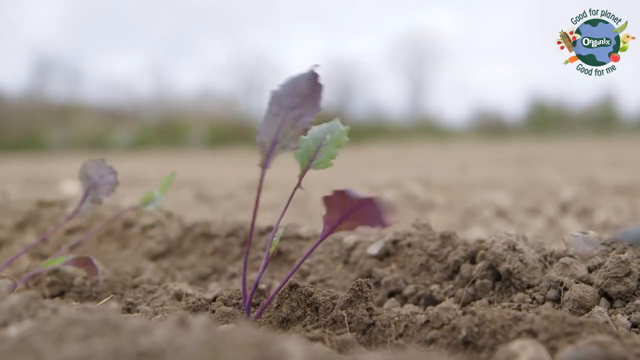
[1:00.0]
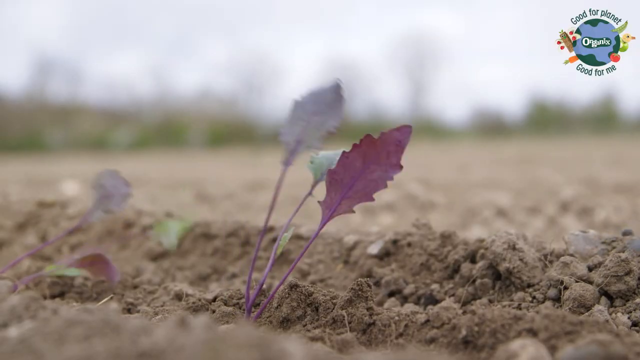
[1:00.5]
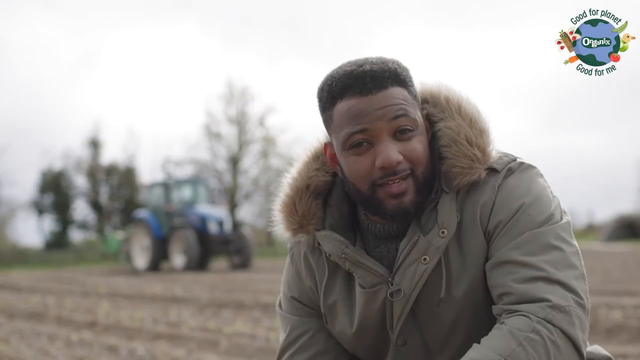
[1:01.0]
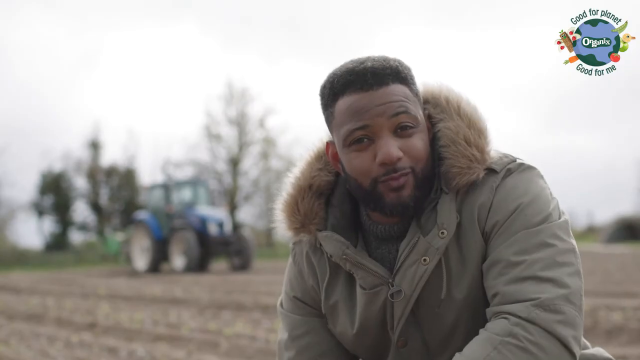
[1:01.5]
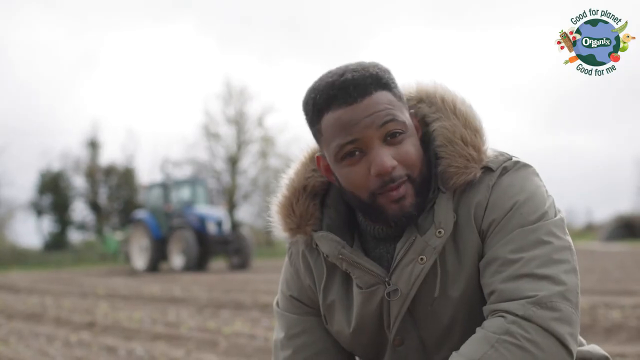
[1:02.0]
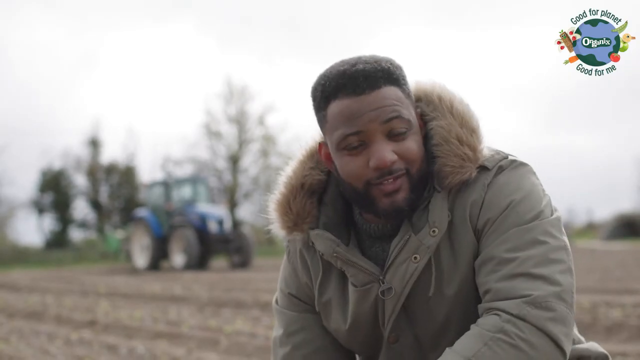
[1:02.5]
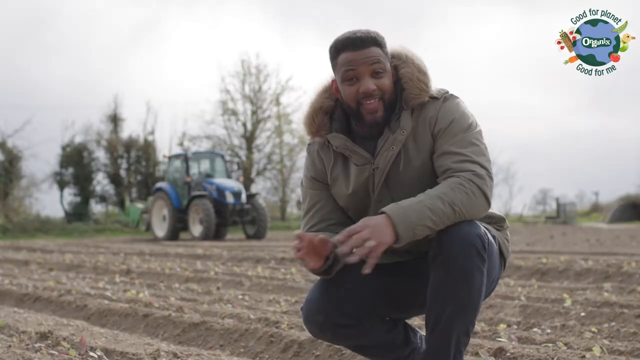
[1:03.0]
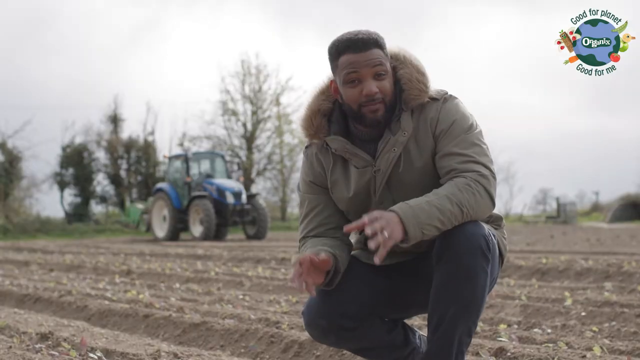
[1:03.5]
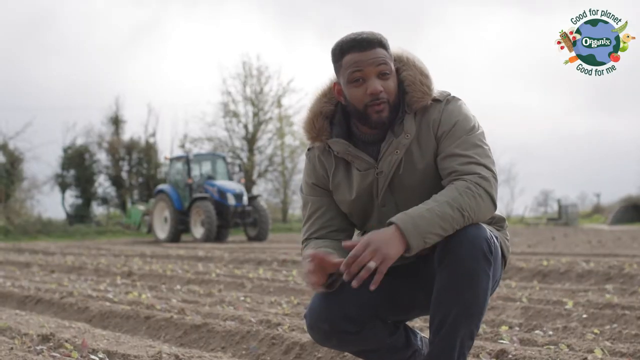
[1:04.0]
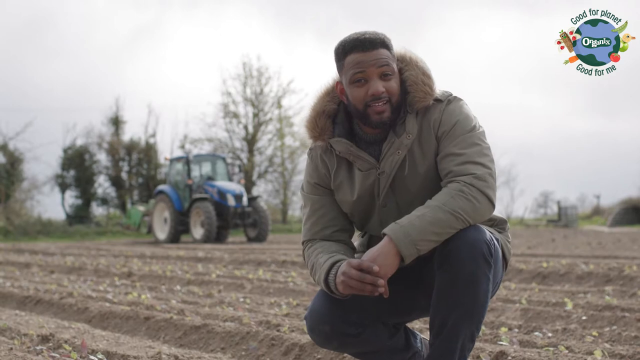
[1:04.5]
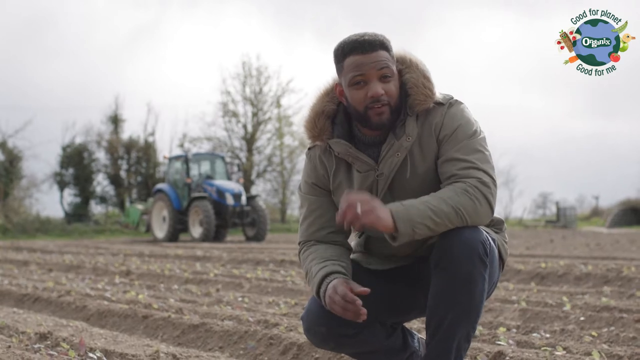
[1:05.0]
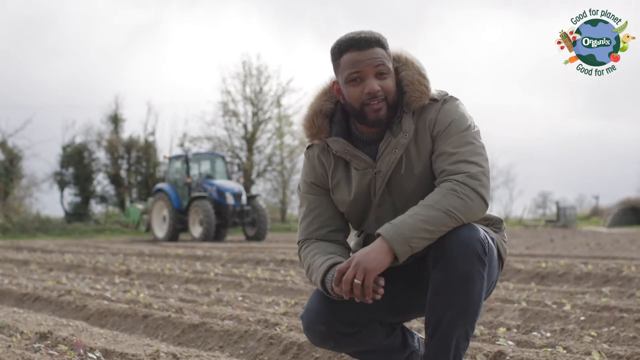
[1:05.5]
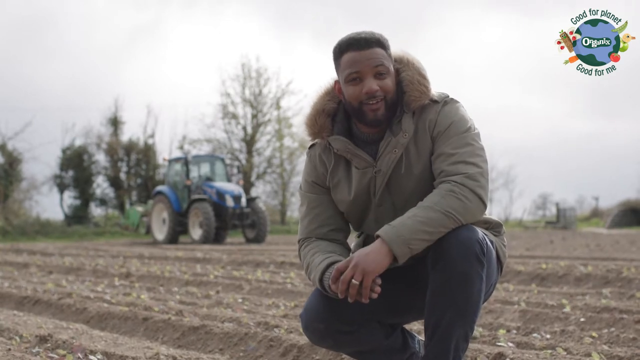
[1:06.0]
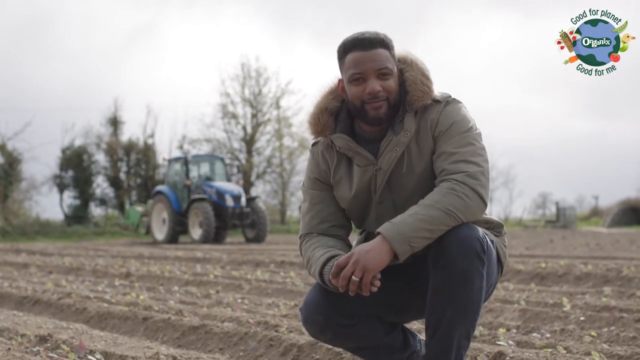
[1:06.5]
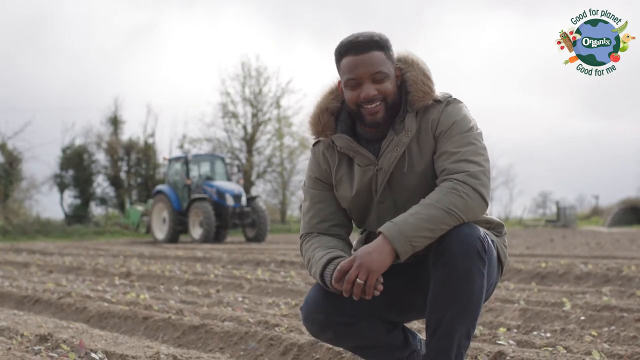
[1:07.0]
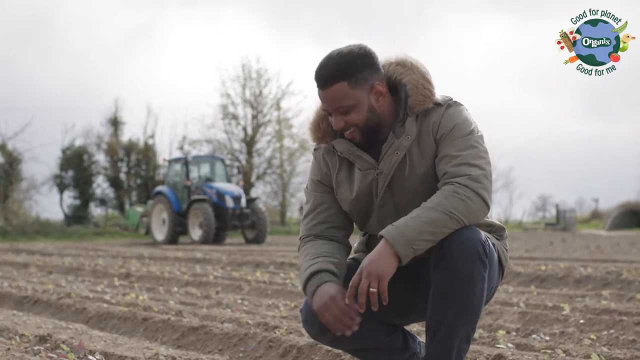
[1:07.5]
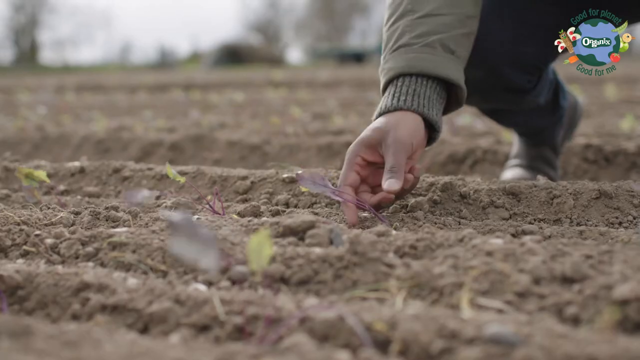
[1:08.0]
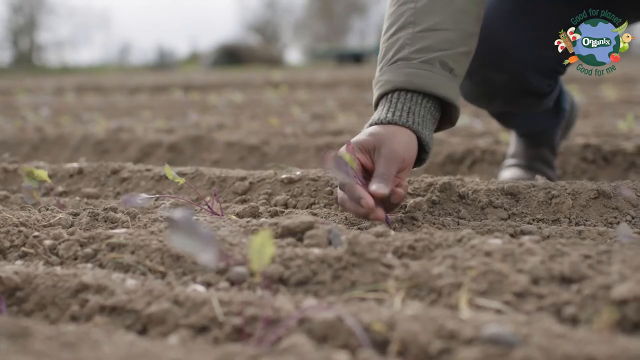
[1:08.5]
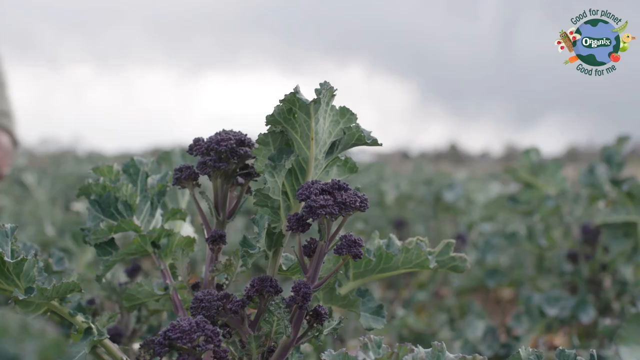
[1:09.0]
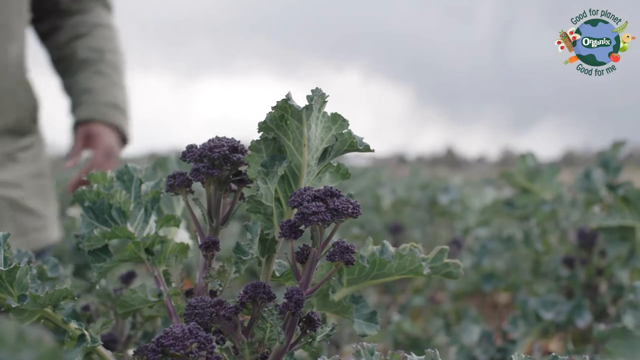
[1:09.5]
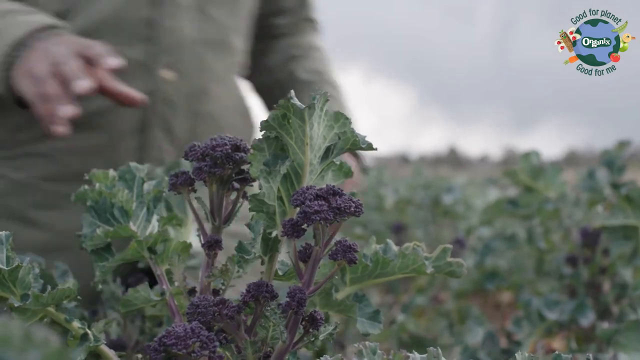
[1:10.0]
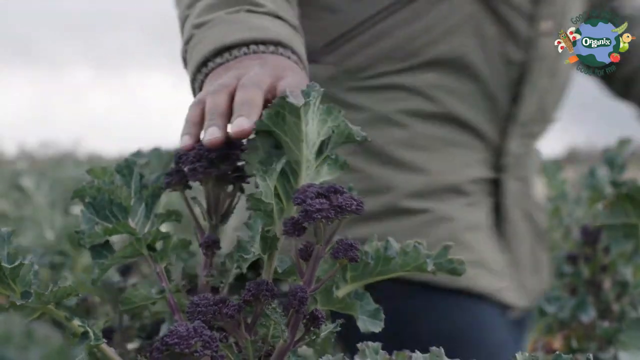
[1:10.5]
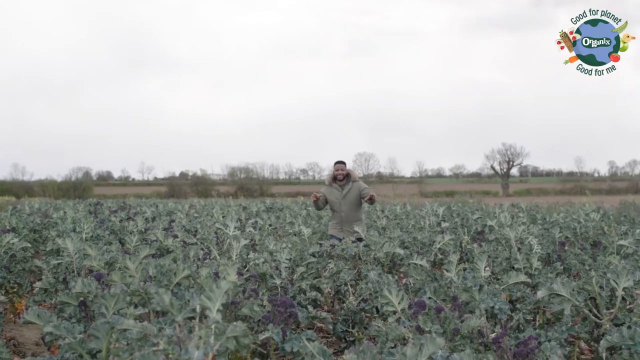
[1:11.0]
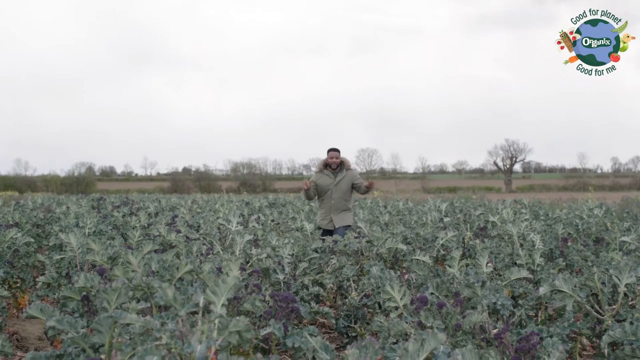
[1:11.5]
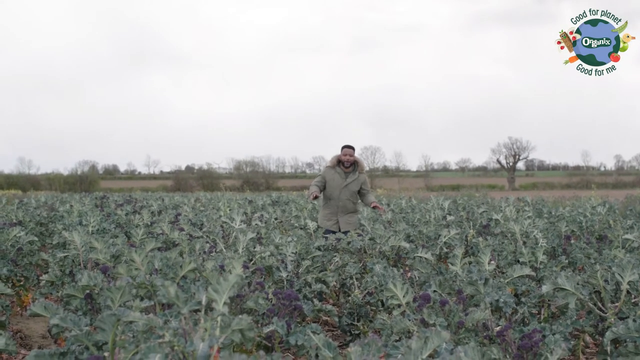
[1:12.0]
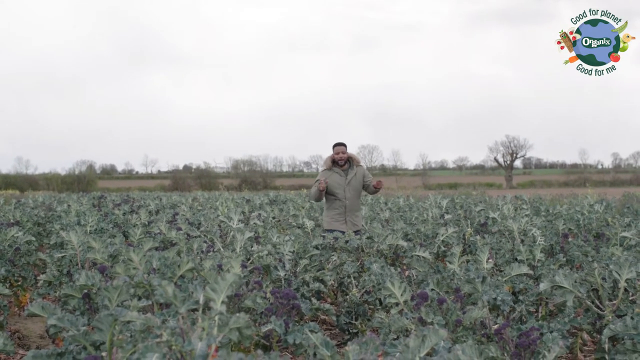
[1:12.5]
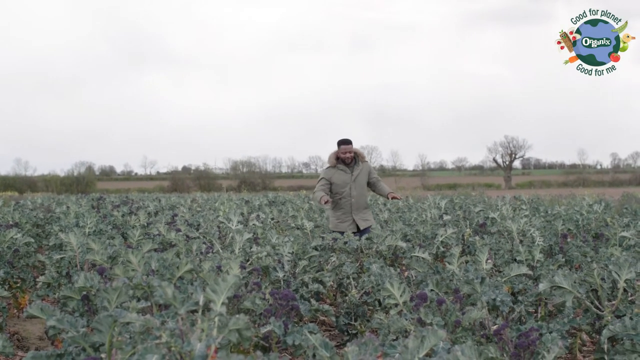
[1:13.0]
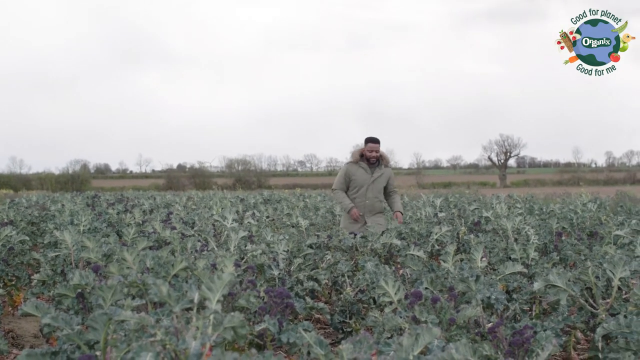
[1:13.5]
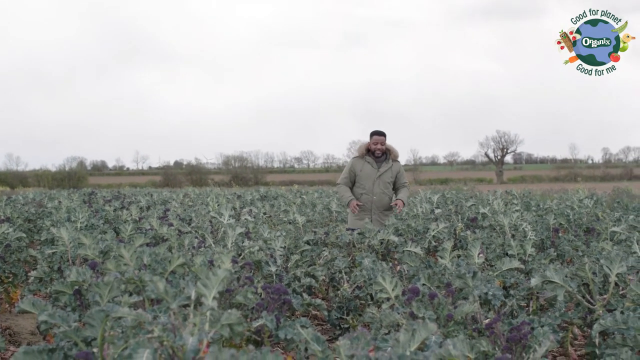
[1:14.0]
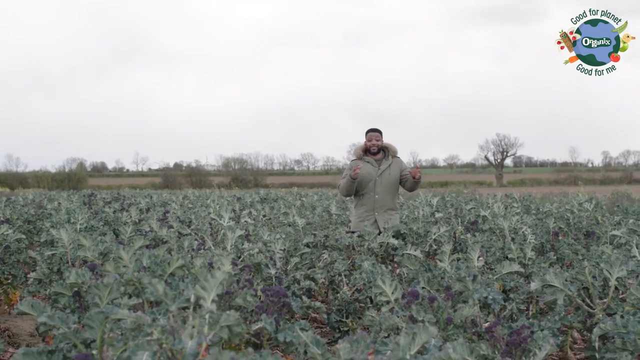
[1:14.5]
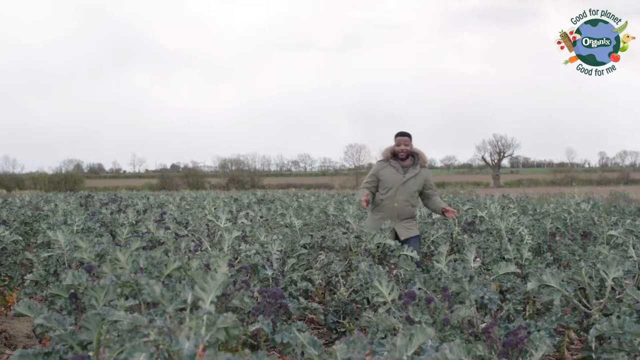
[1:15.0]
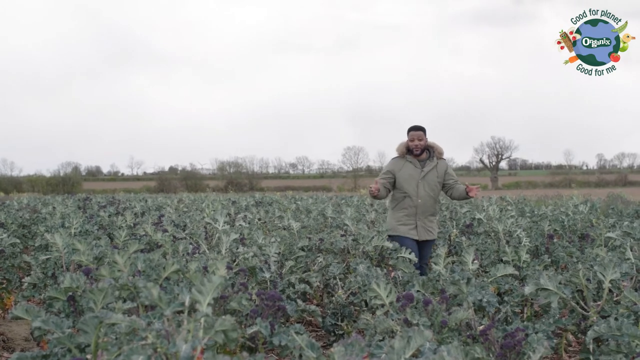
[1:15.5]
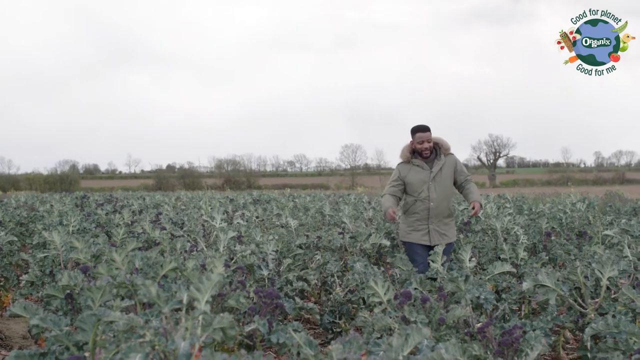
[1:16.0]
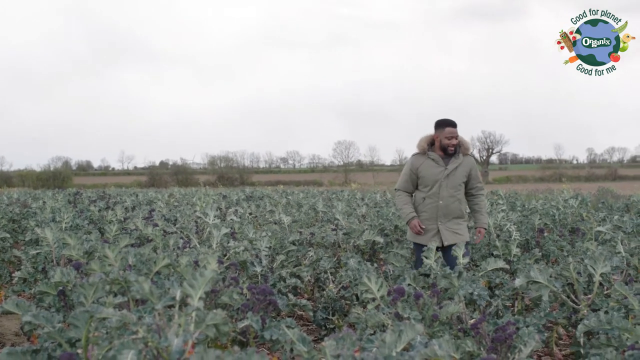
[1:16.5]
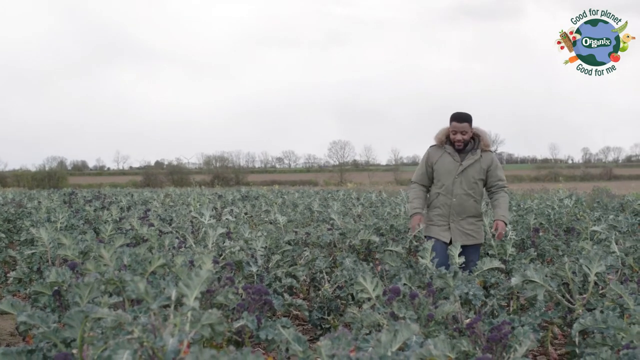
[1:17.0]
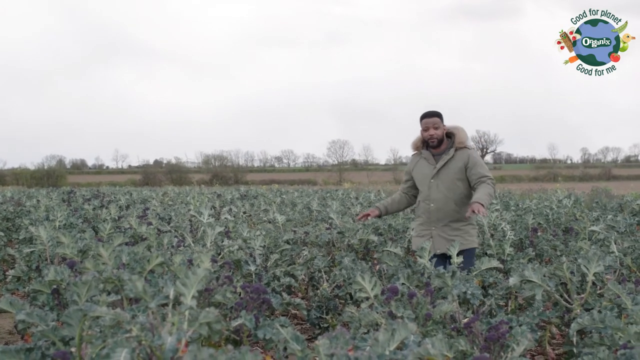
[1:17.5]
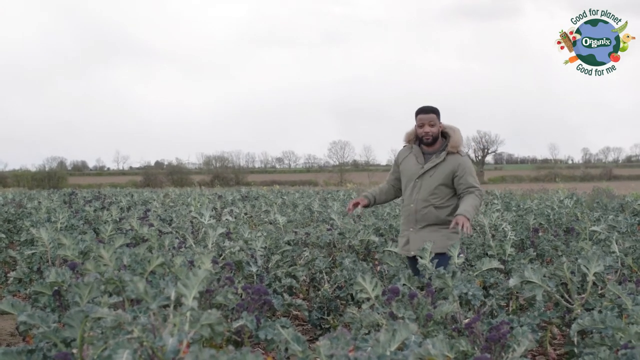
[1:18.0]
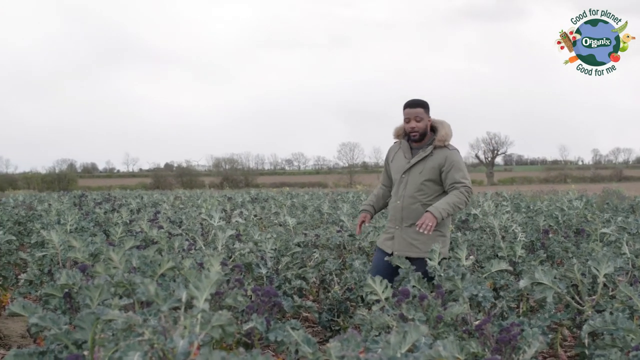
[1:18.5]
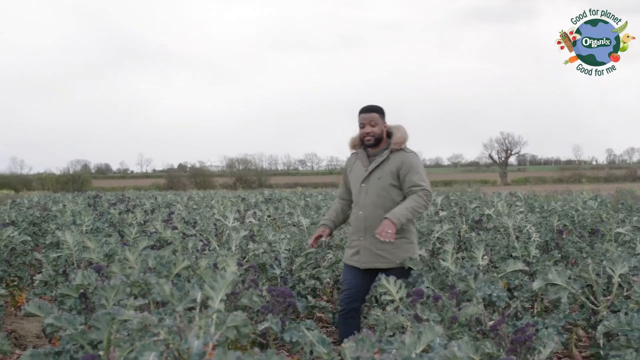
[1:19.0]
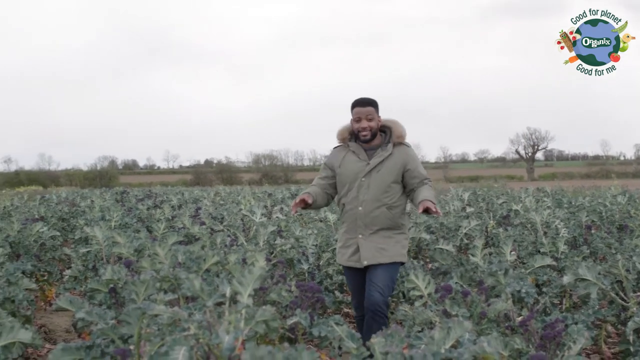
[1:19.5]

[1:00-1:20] A colourful background with no banner shows the title "on the farm with JB". JB wears a fluffy jacket; the setting around him looks really cold, with a lot of hay visible in the background. He shows the small plants and some lettuce. A few seconds show JB on a tractor, looking as if he is explaining his farming methods. A short shot shows two other males working with him; no females are visible. Towards the end, JB is off the tractor, showing the soil and the fresh plants he has grown on the farm.